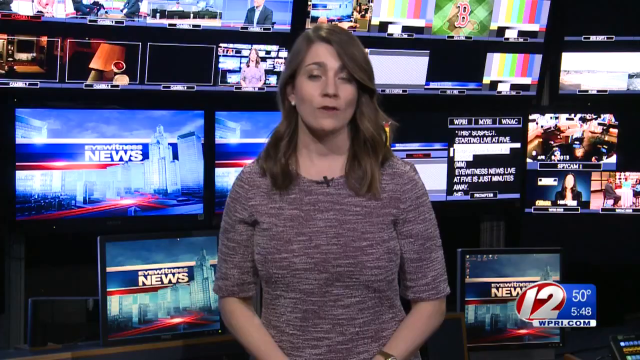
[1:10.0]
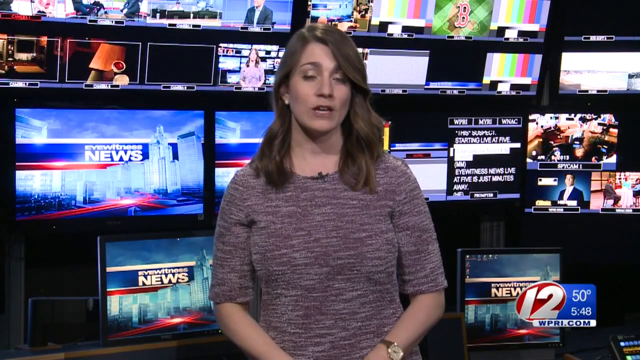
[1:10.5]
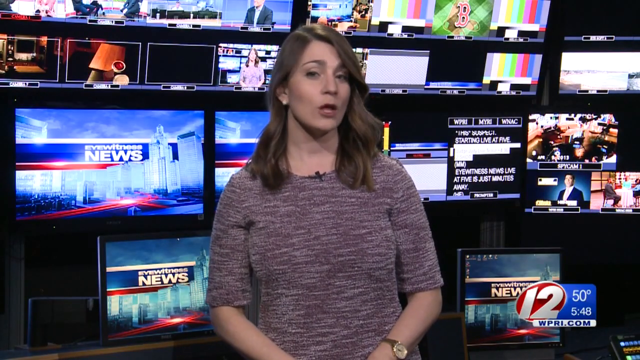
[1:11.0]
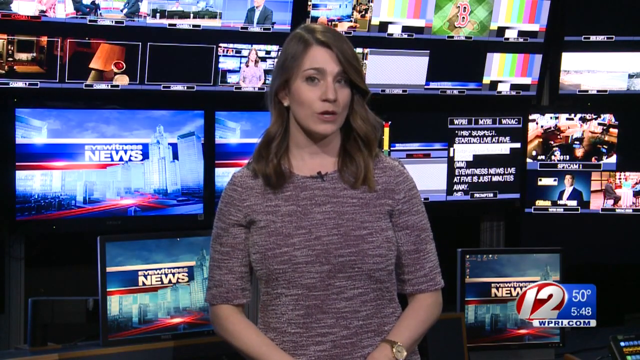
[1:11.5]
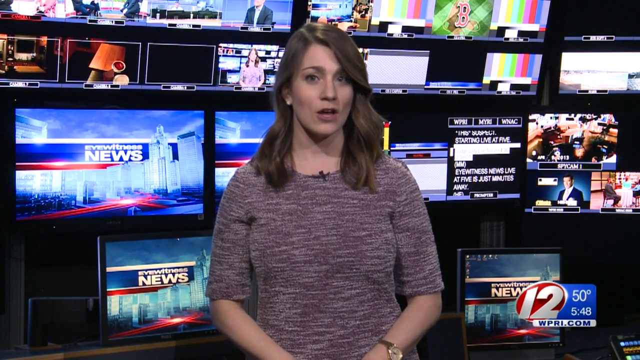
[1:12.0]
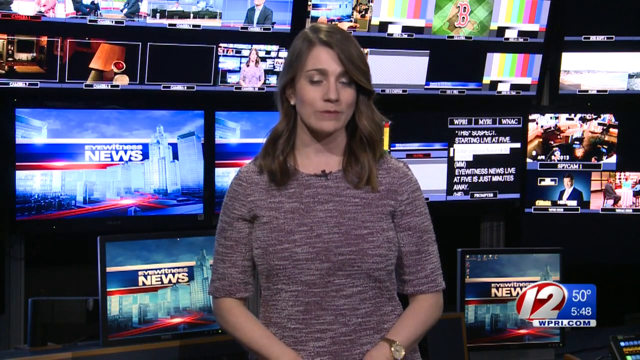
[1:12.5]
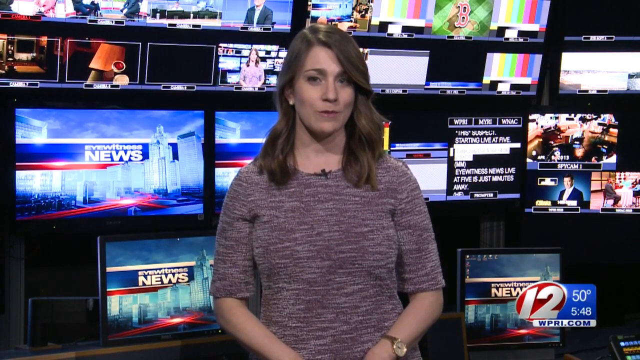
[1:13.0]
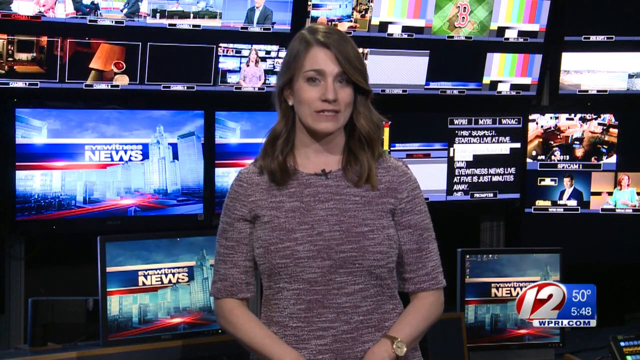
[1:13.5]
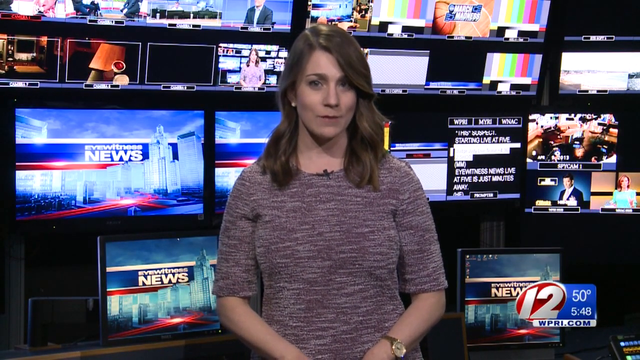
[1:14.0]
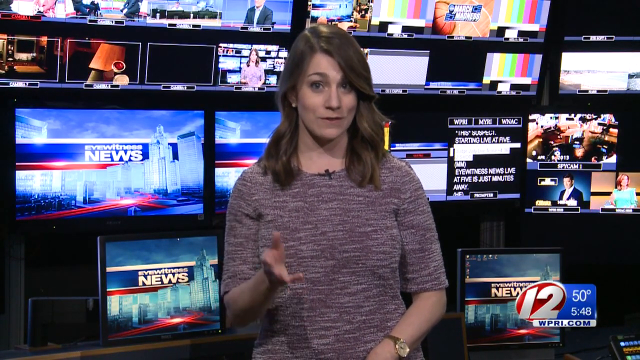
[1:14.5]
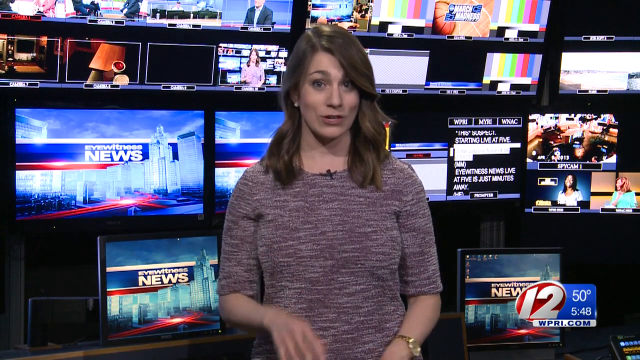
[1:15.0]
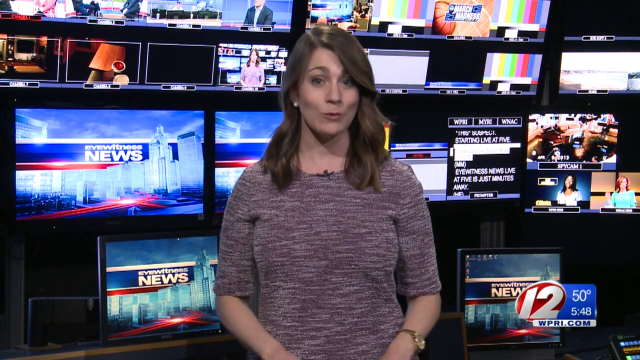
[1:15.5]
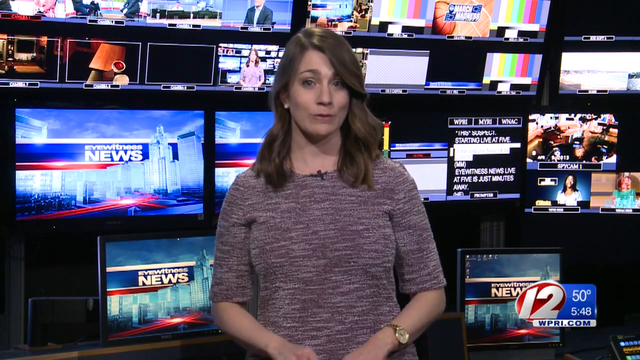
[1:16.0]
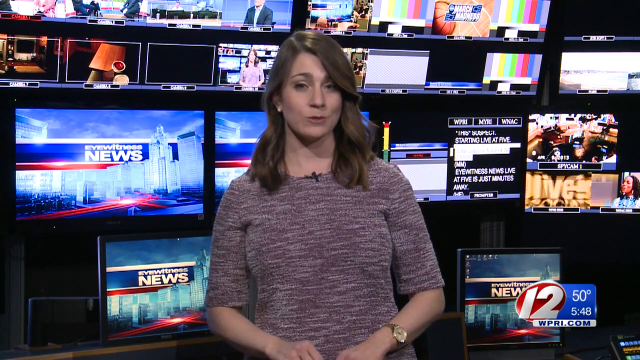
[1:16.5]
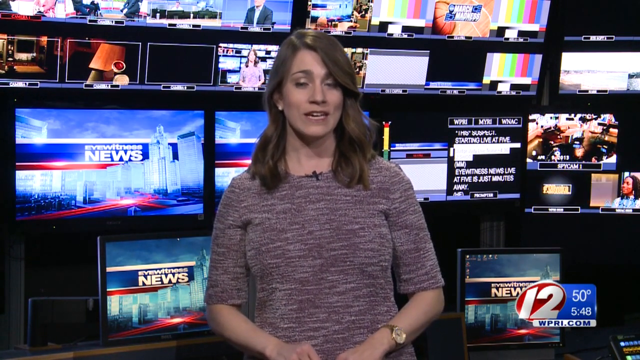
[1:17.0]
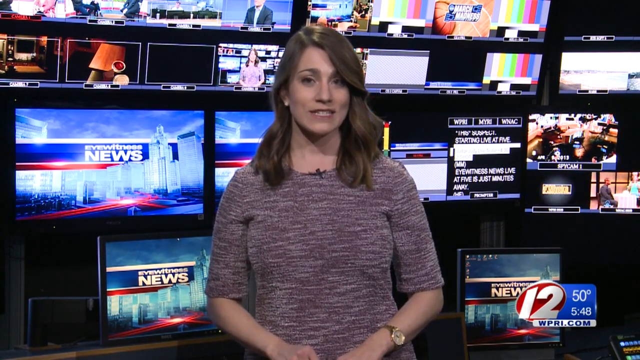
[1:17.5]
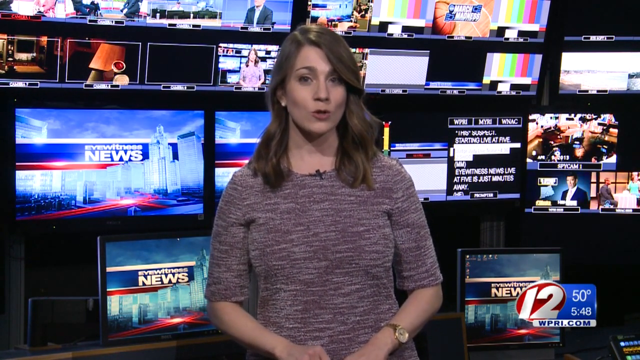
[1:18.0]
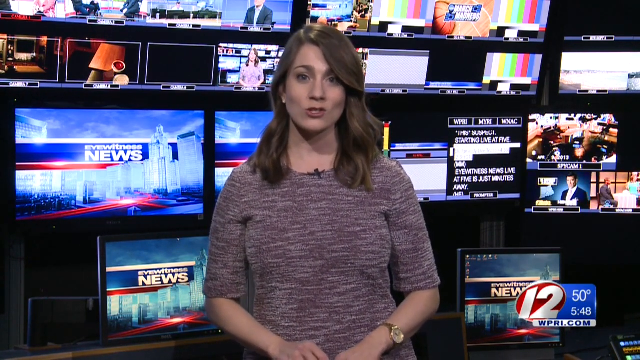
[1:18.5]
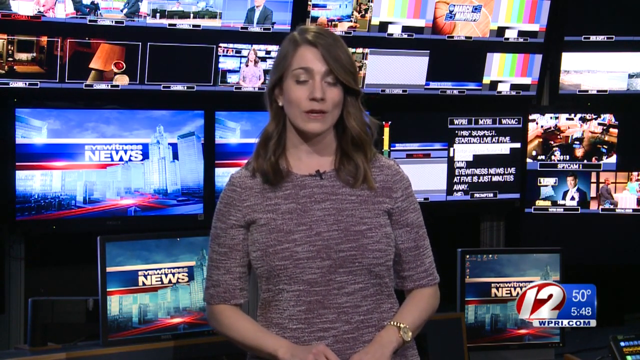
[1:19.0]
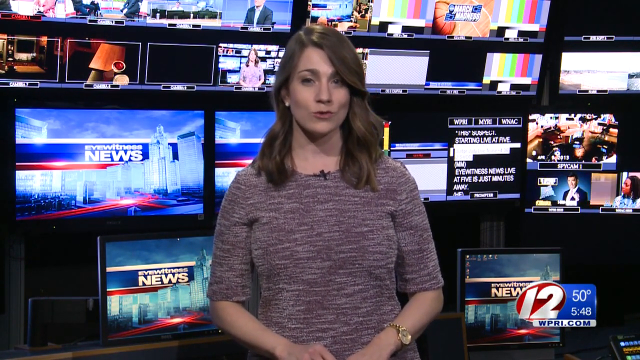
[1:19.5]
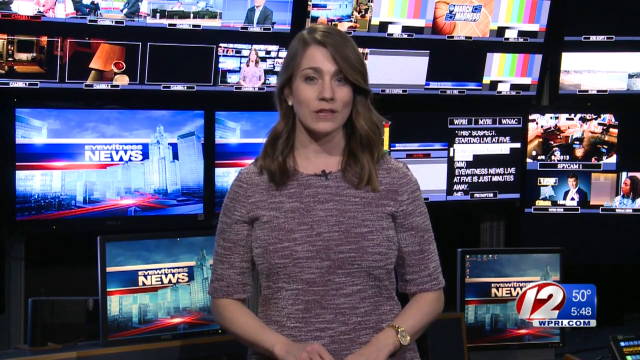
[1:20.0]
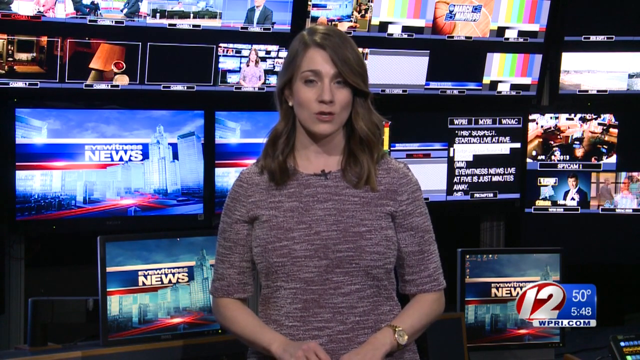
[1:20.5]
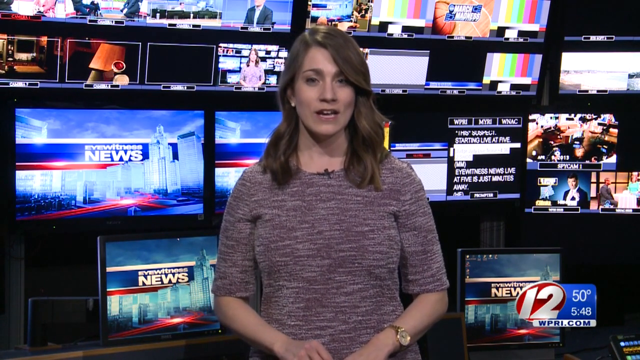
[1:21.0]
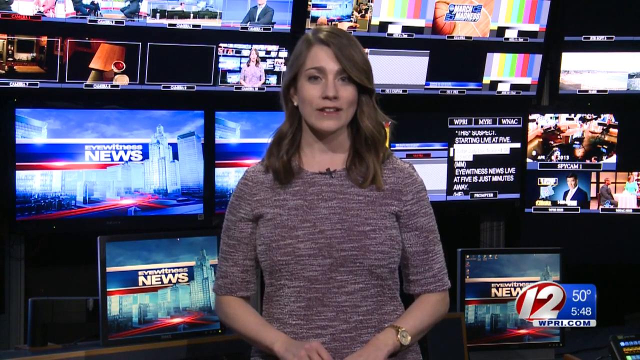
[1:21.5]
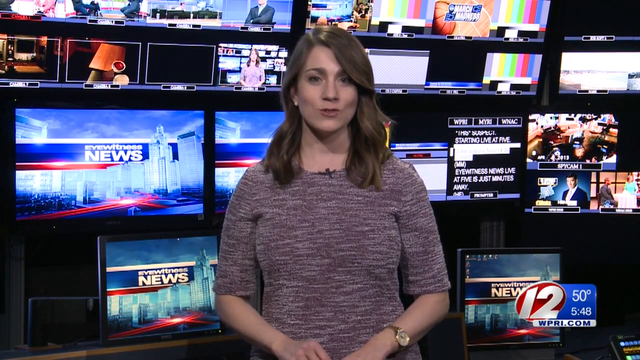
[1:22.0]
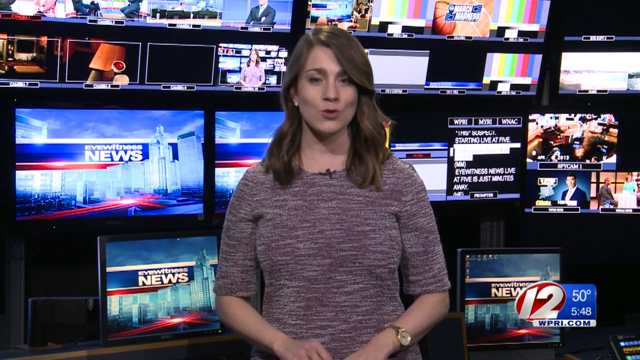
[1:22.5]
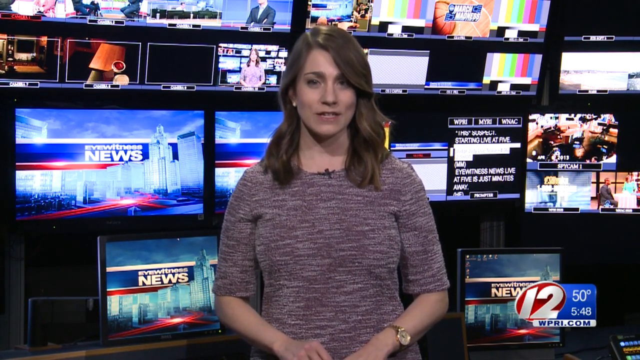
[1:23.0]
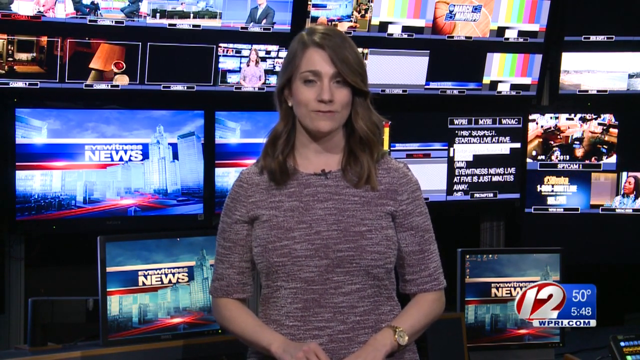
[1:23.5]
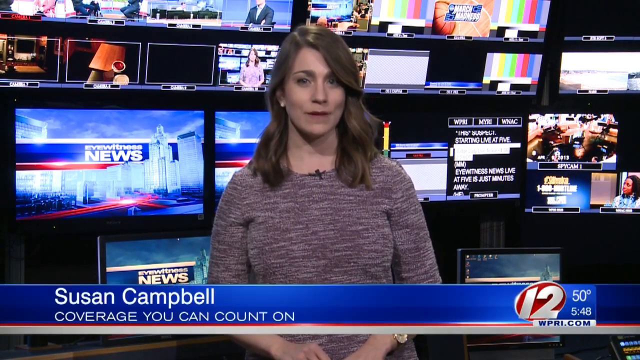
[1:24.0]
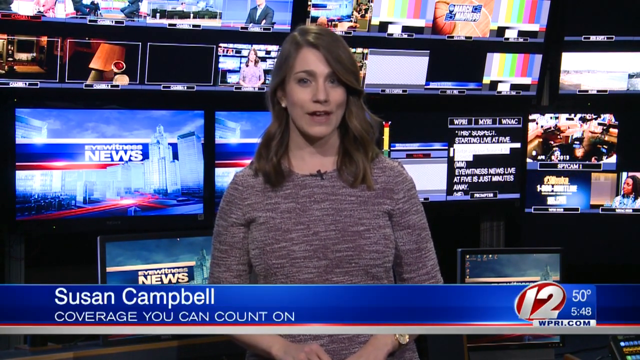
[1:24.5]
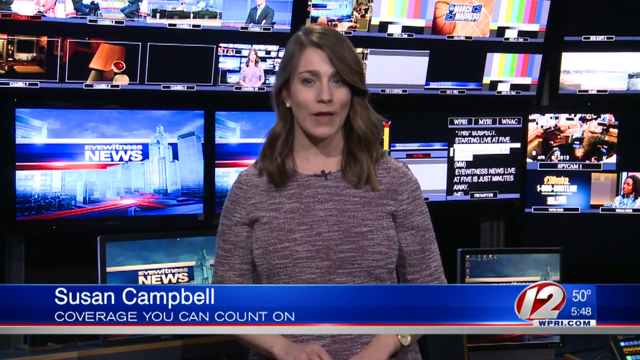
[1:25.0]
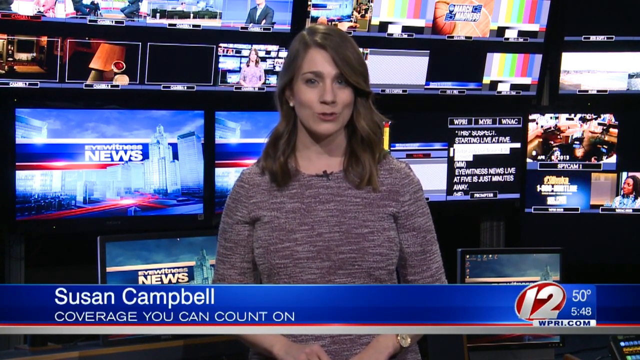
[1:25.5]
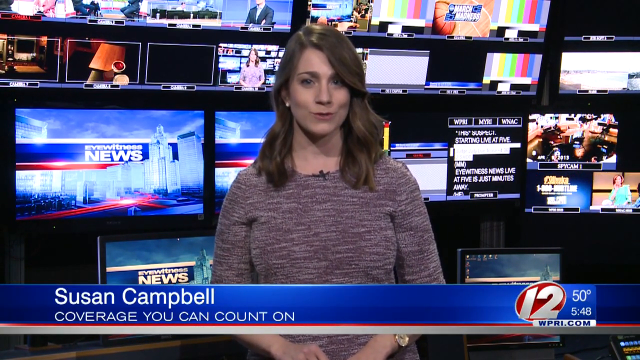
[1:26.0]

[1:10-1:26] Susan Campbell is back on the screen, apparently wrapping up her news report. She is a middle-aged woman, possibly in her late 40s to early 50s or older, wearing a swoop-neck top with three-quarter-length sleeves and a patterned sweater, with a microphone clipped to the sweater. She is in the newsroom with the screens behind her showing different information from the Eyewitness News. It looks like she is finishing her segment, called News You Can Use.